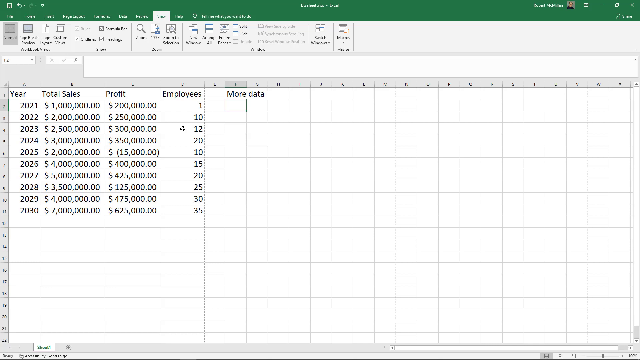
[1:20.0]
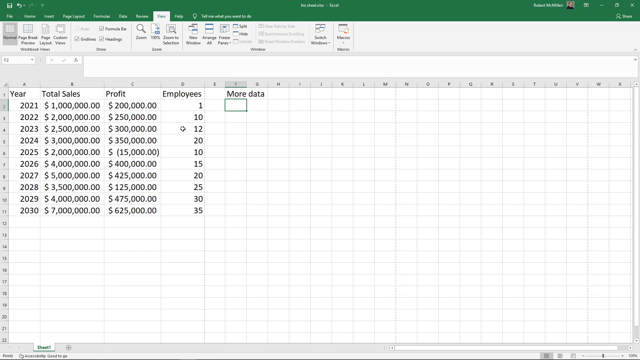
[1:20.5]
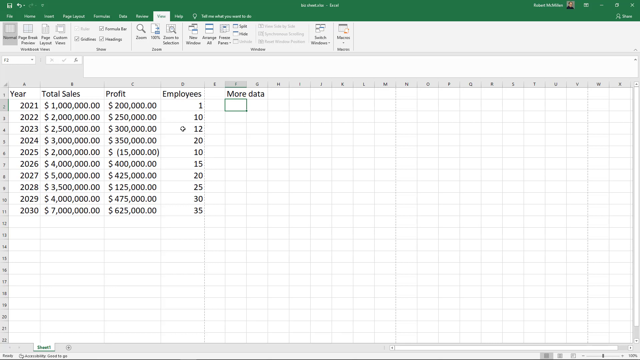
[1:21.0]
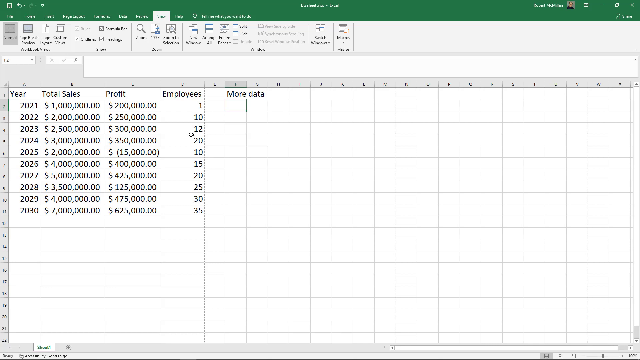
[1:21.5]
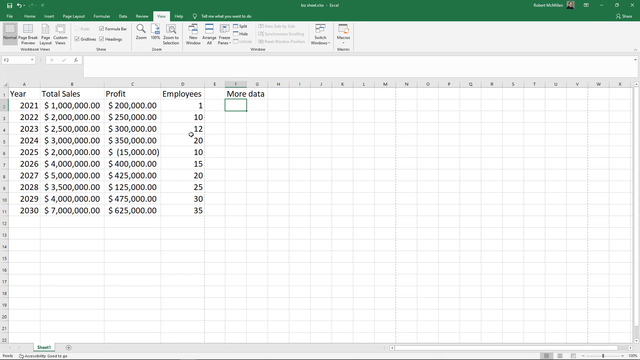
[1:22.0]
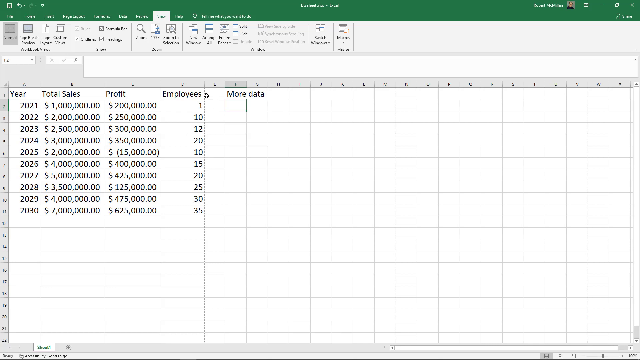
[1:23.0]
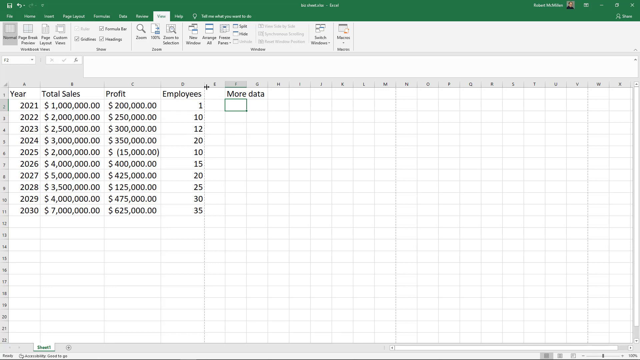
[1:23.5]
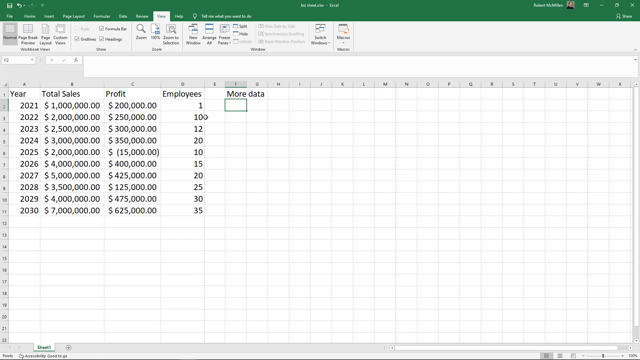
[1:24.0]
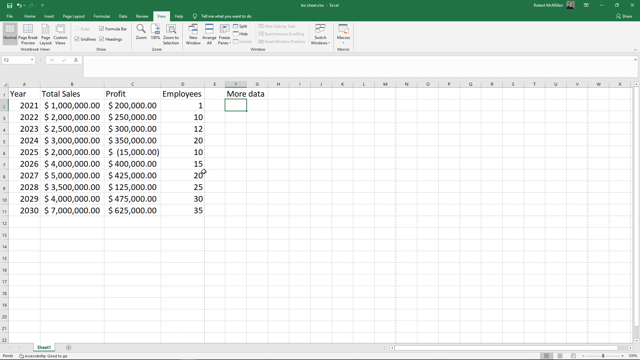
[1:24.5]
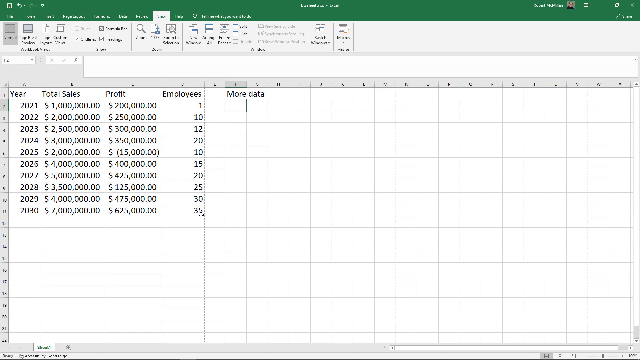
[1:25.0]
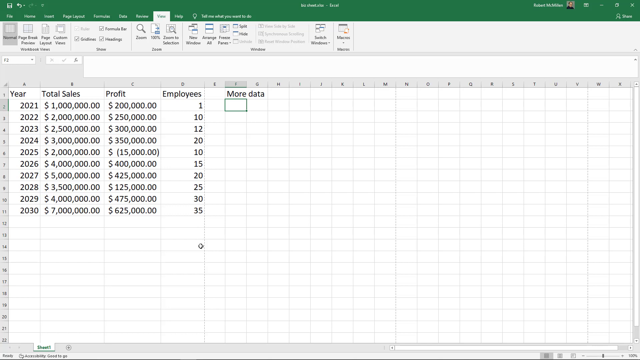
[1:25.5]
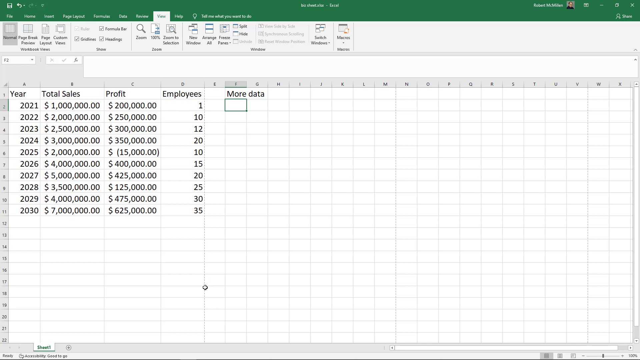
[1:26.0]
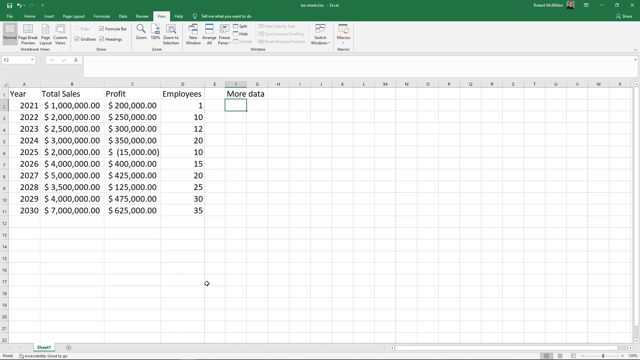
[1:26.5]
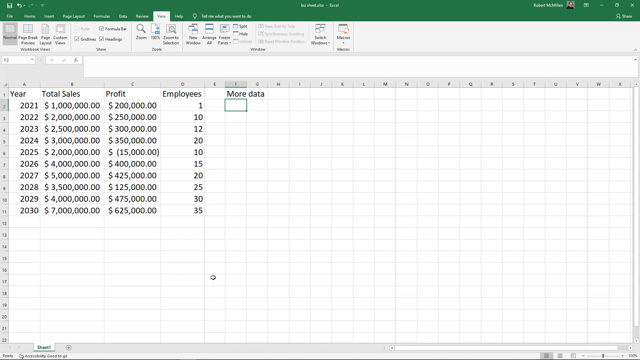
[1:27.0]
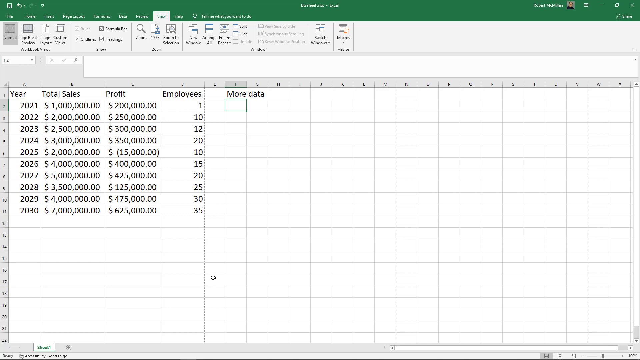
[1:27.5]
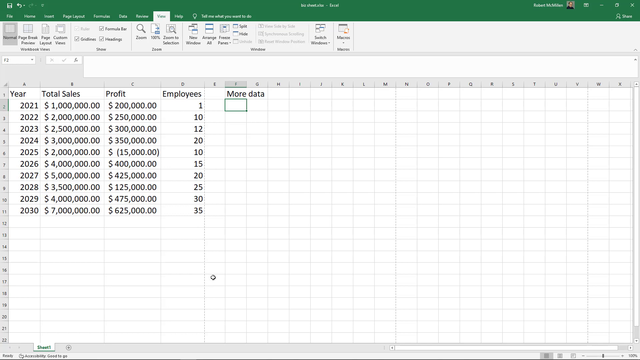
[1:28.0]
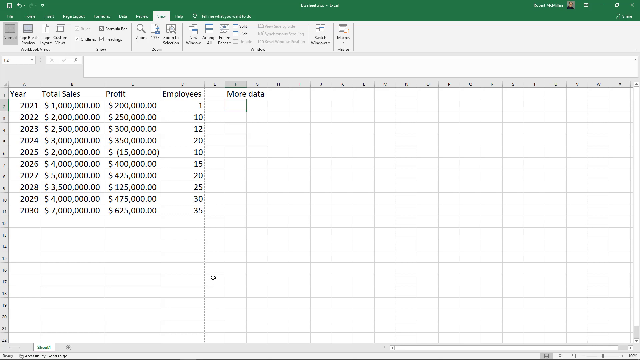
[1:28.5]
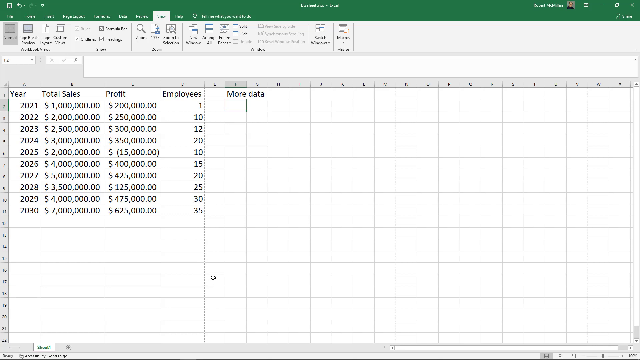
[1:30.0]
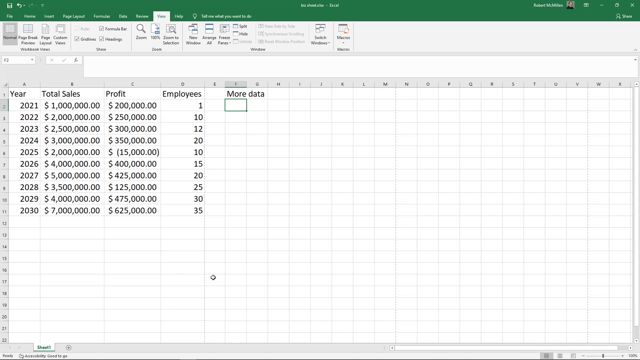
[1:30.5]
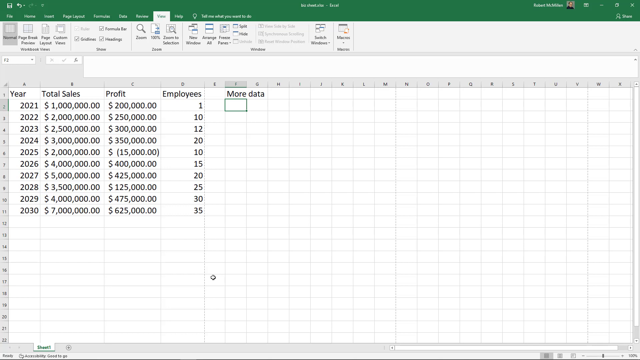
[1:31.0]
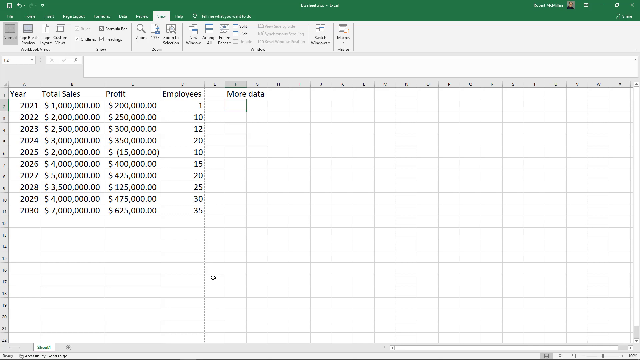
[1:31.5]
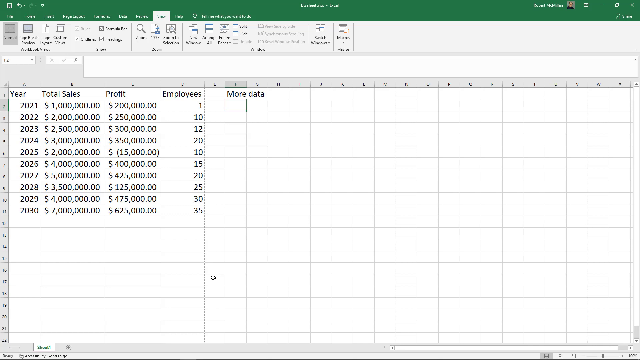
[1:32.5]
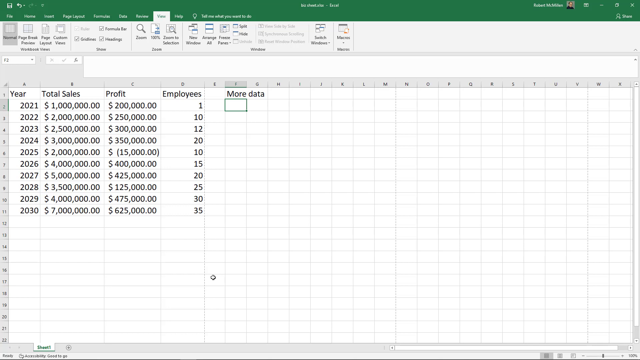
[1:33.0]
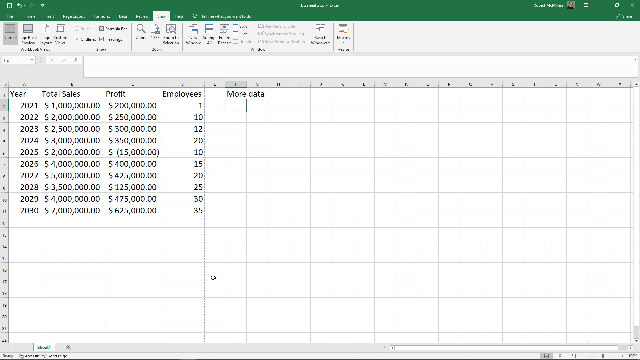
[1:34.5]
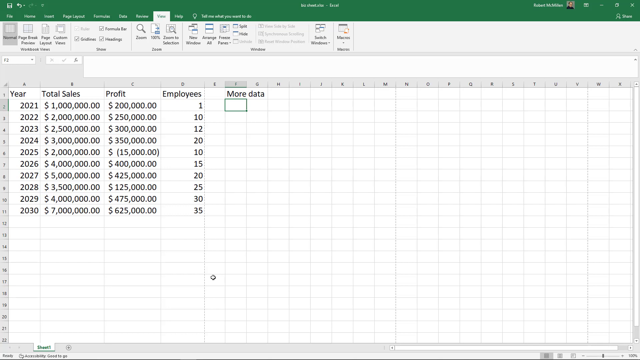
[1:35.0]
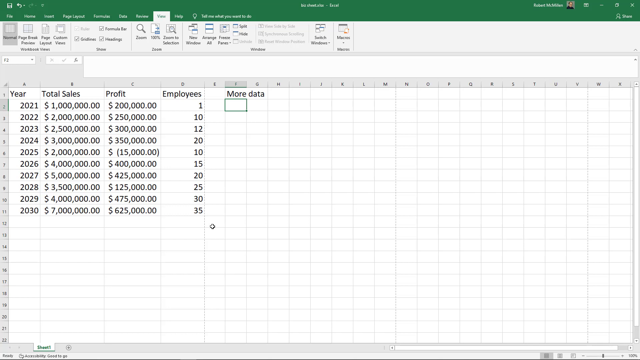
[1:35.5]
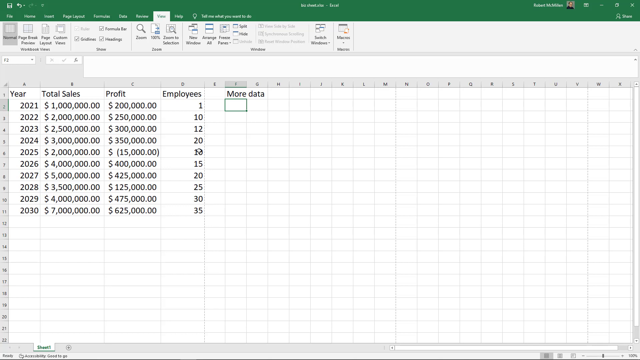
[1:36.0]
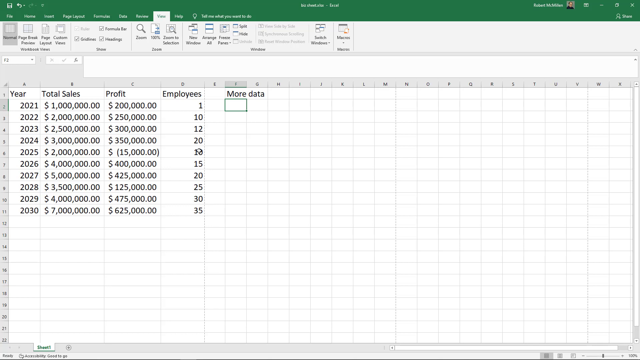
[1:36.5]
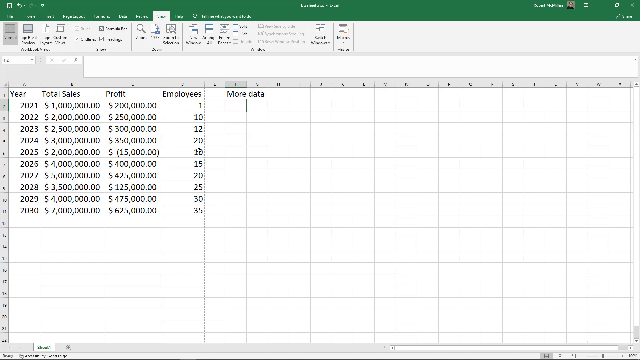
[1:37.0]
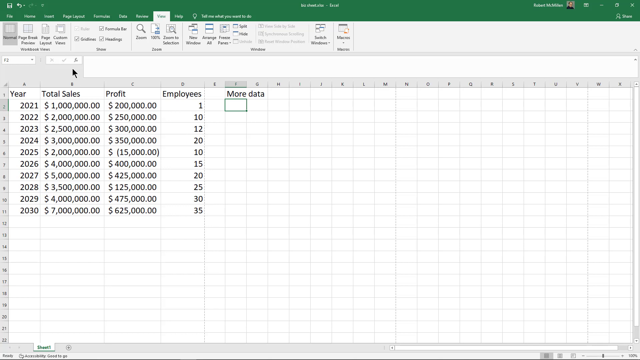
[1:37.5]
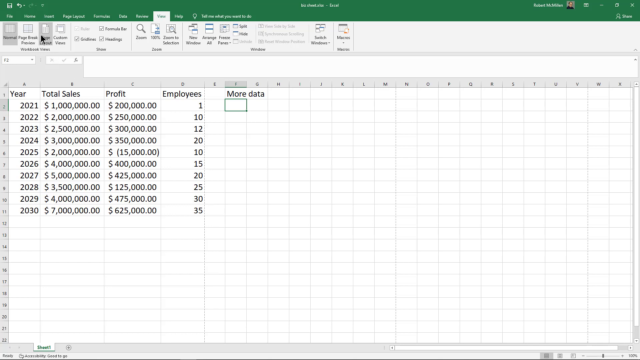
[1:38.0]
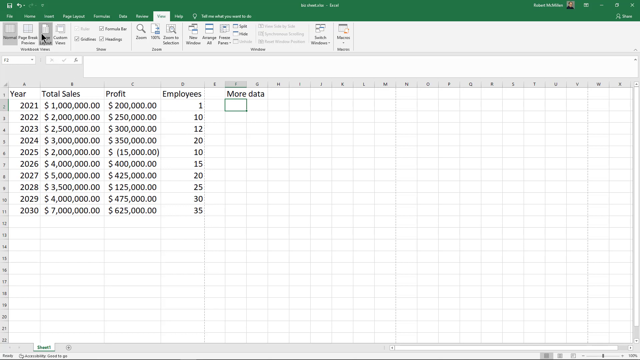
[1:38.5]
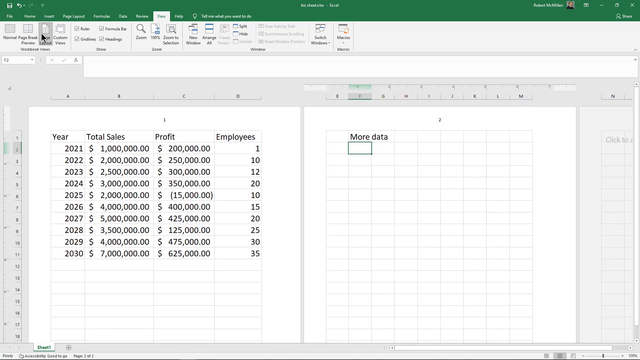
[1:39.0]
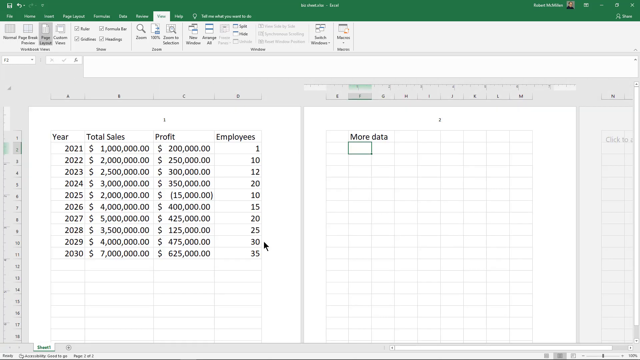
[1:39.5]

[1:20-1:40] A spreadsheet has information filled in from line 1 to line 11. The categories are "year", "total sales", "profit", "employees" and "more data". The cursor moves around under the employees category, which starts at 1 and then reads 10, 12, 20, 10, 15, 20, 25, 30, ending at 35 in the year 2030. The cursor hovers below all the entered data, then moves back up, and the user clicks an icon on the menu that looks like a sheet of paper. The screen is now split in half: the left side is still filled with the data, while the right side has only "more data" written at the top and the rest is blank. A divider runs down the middle between the two sheets.